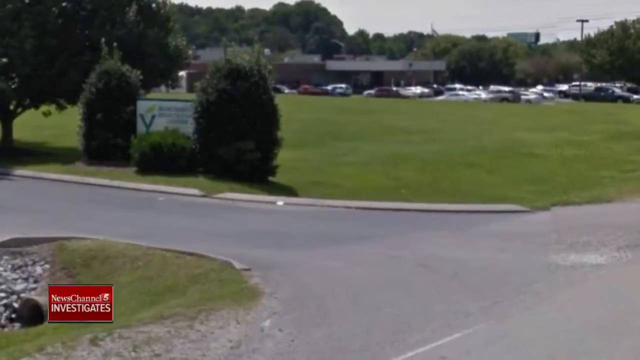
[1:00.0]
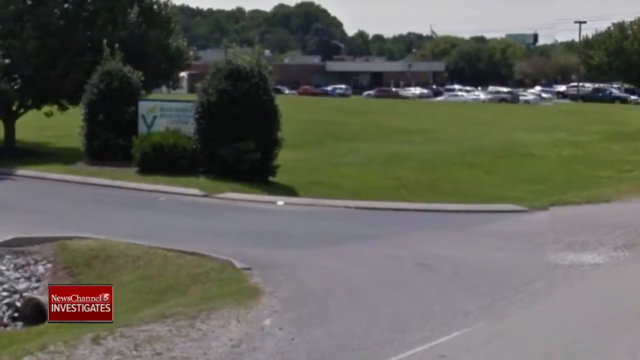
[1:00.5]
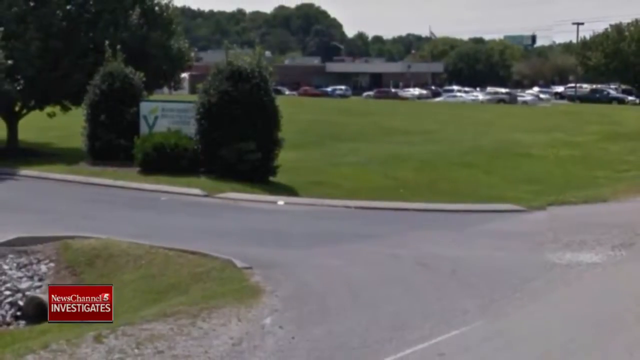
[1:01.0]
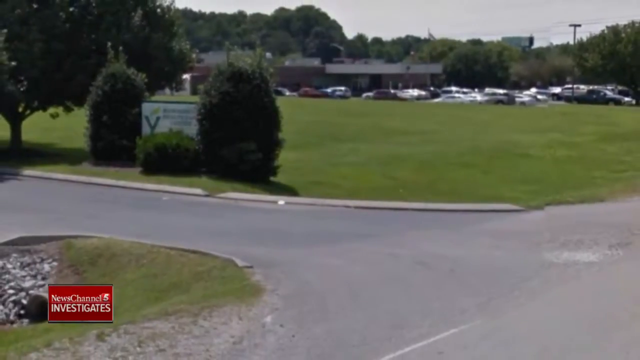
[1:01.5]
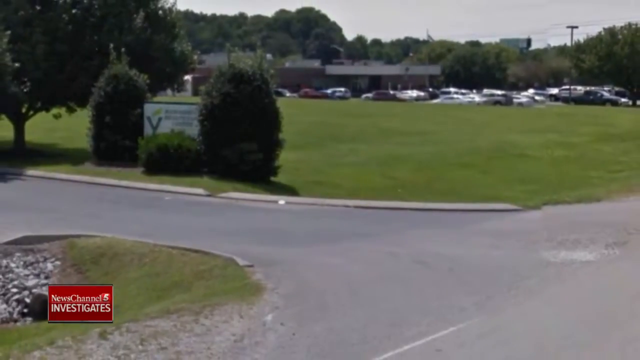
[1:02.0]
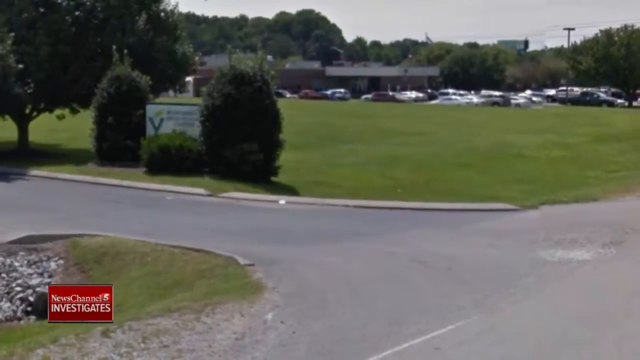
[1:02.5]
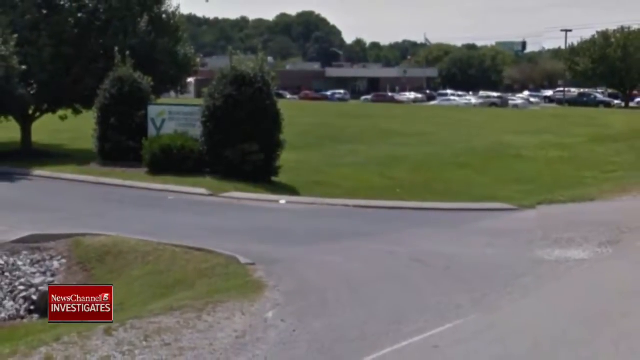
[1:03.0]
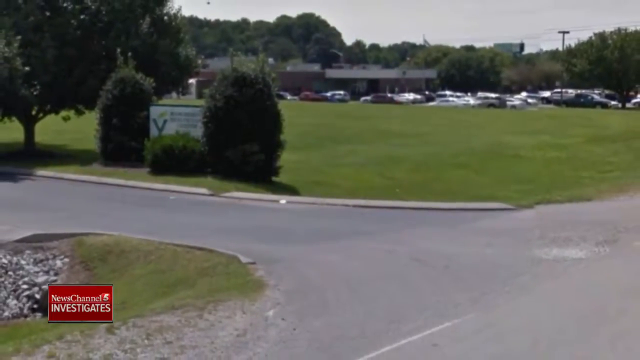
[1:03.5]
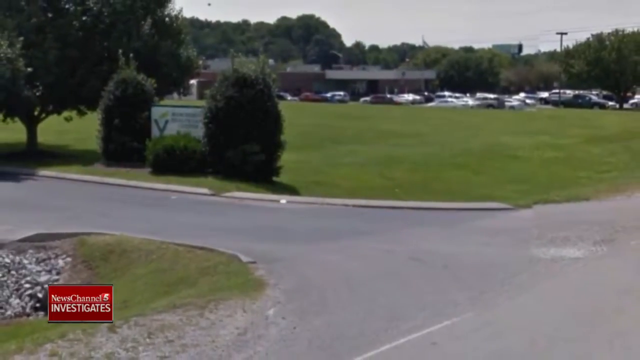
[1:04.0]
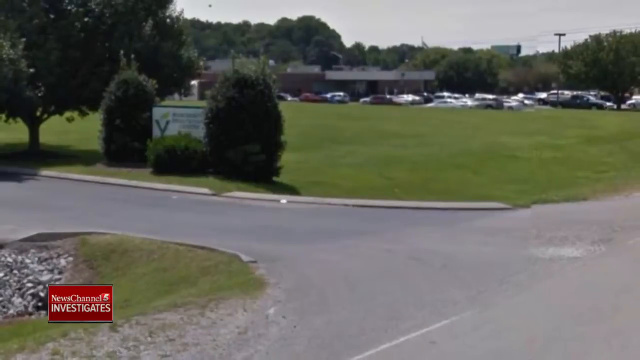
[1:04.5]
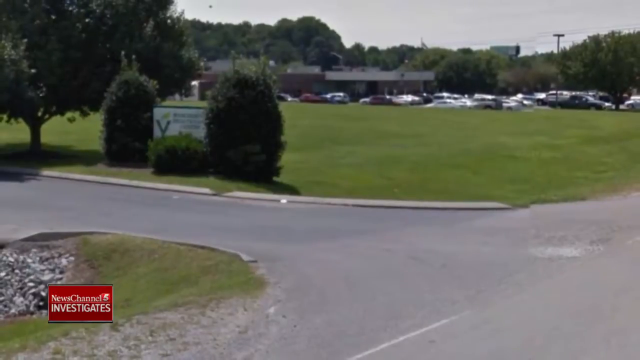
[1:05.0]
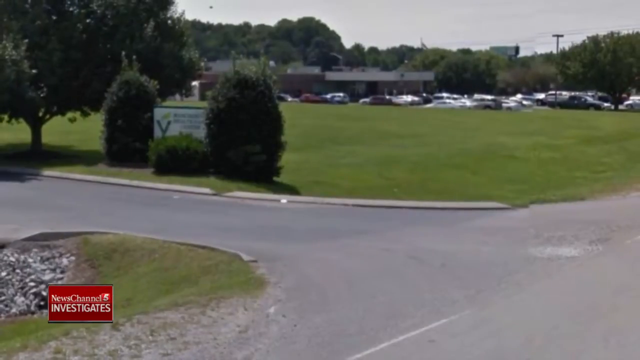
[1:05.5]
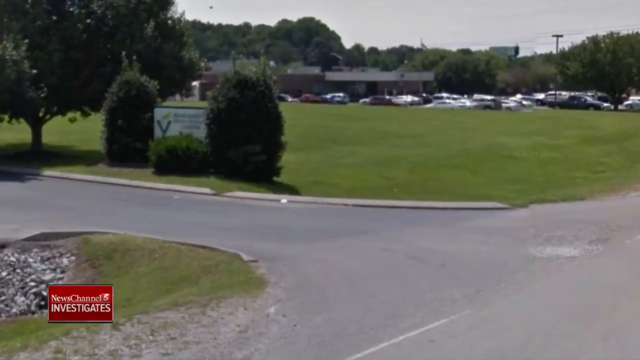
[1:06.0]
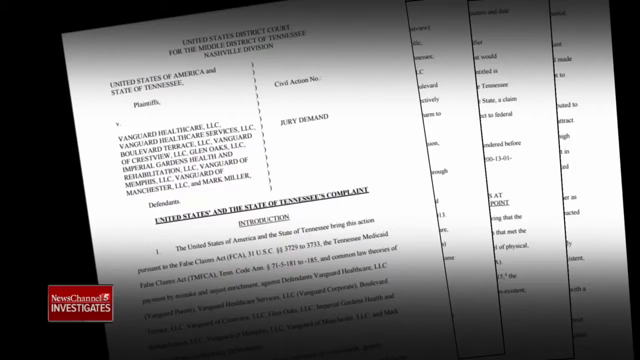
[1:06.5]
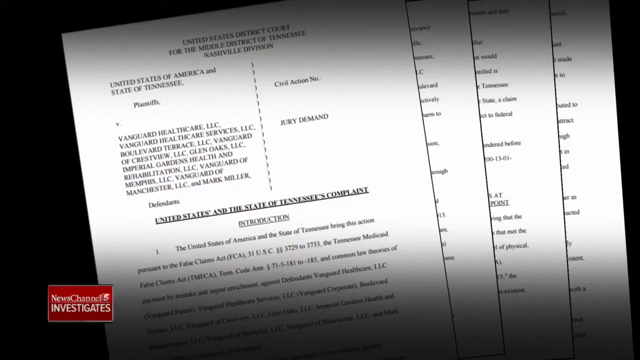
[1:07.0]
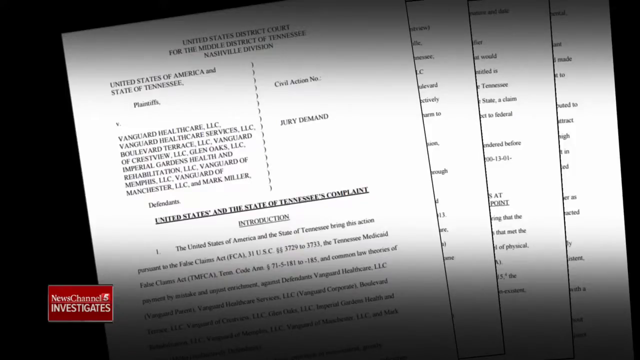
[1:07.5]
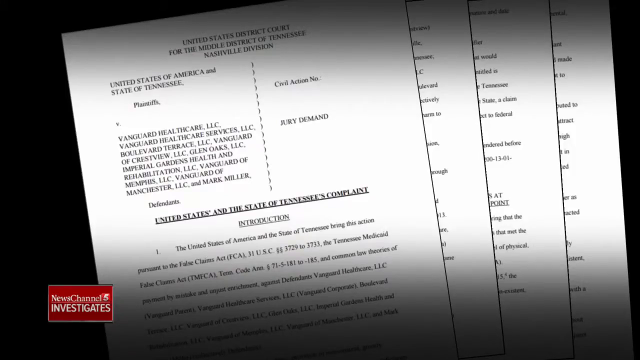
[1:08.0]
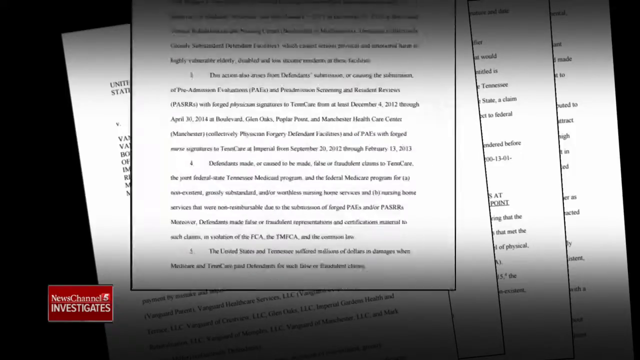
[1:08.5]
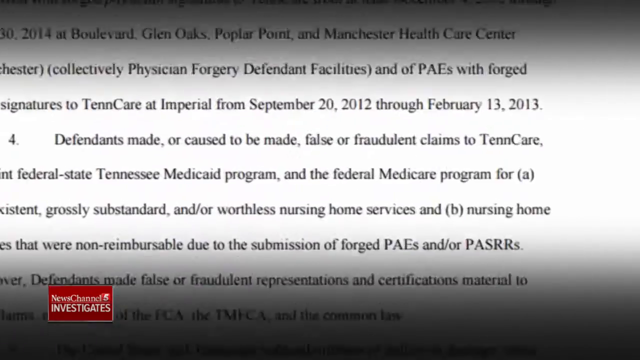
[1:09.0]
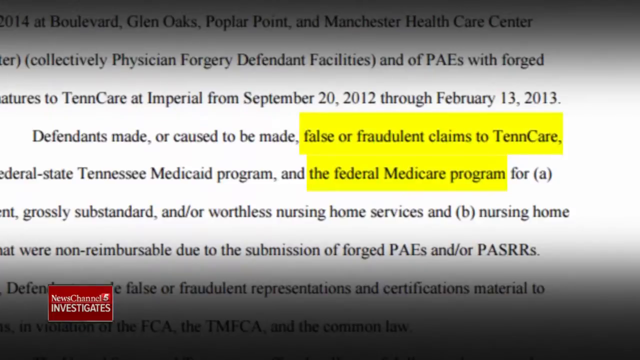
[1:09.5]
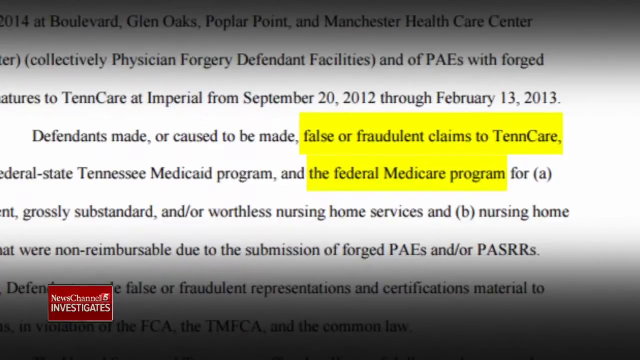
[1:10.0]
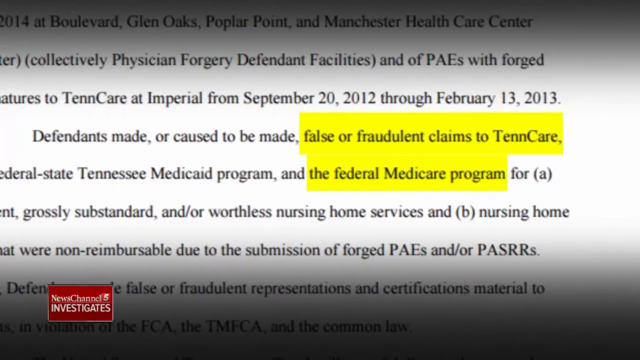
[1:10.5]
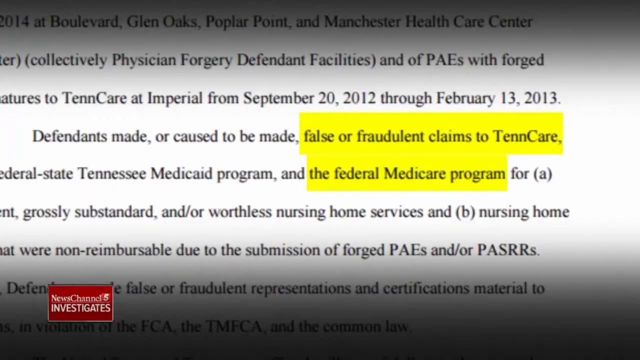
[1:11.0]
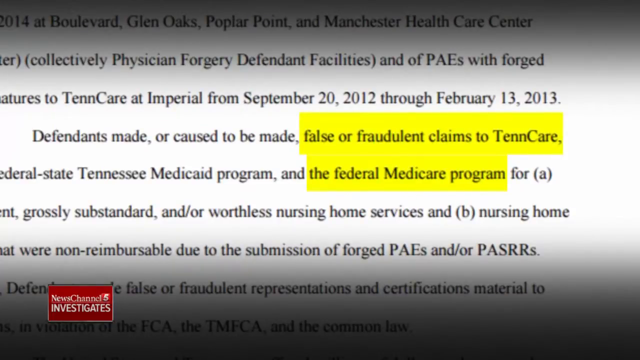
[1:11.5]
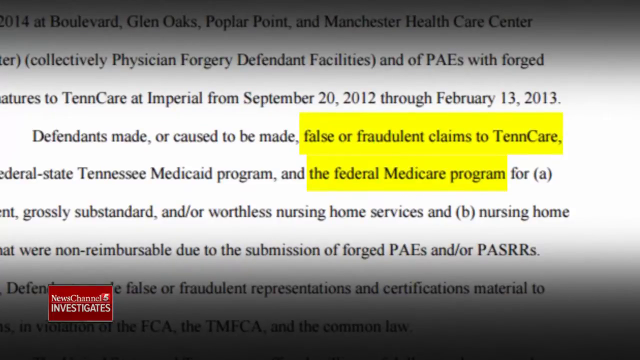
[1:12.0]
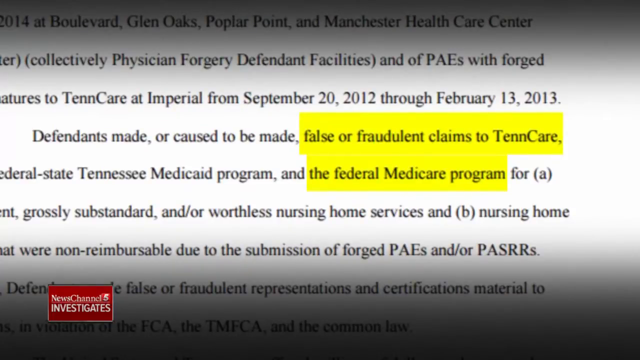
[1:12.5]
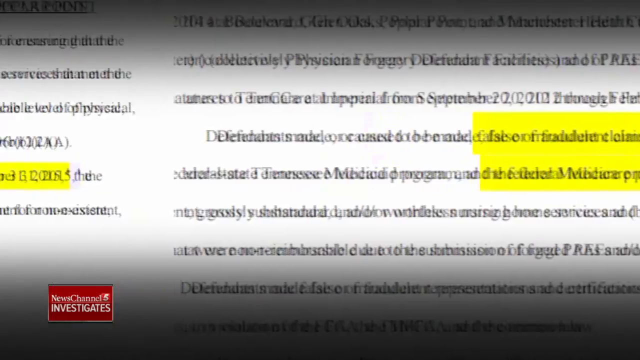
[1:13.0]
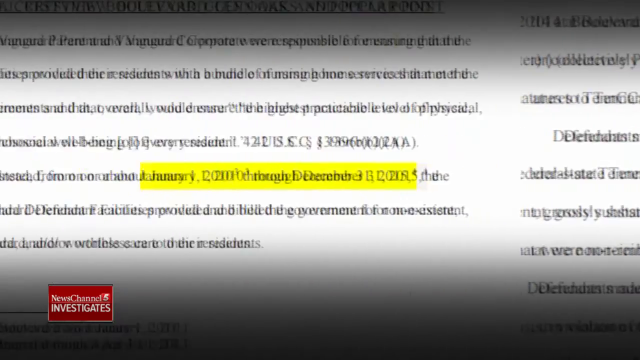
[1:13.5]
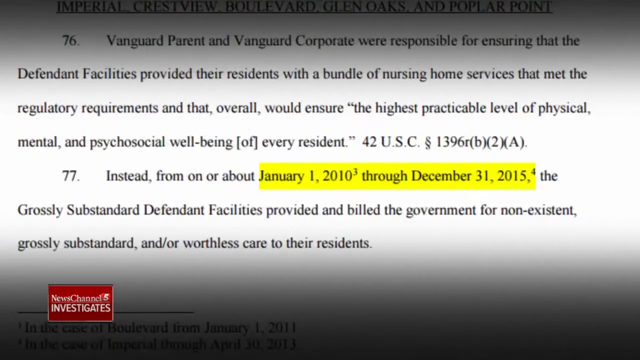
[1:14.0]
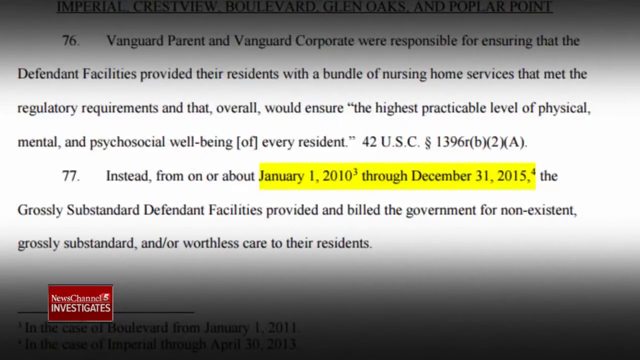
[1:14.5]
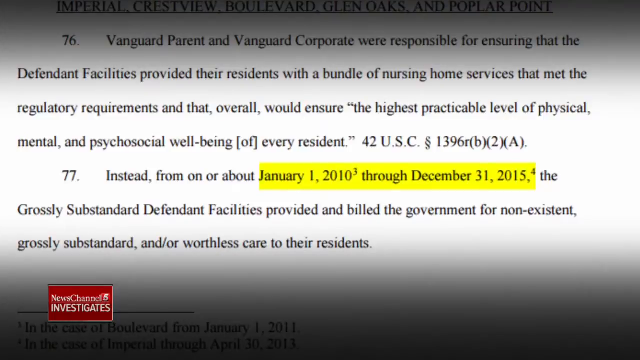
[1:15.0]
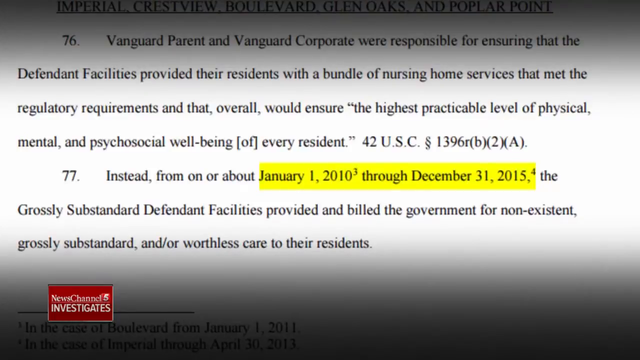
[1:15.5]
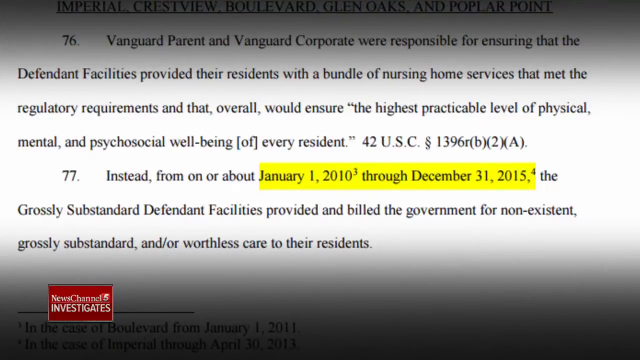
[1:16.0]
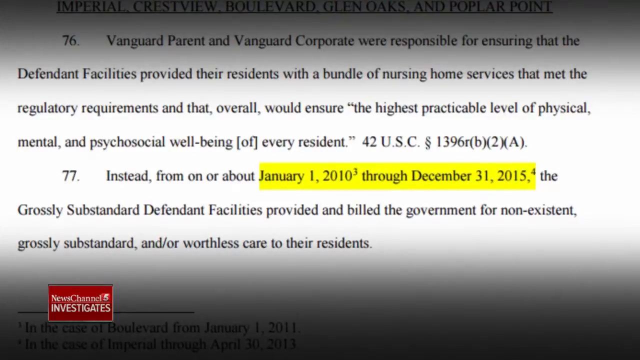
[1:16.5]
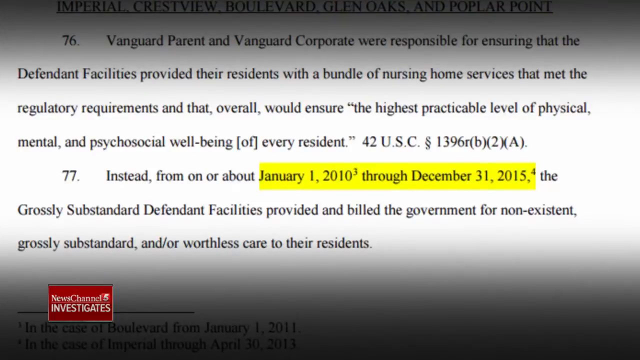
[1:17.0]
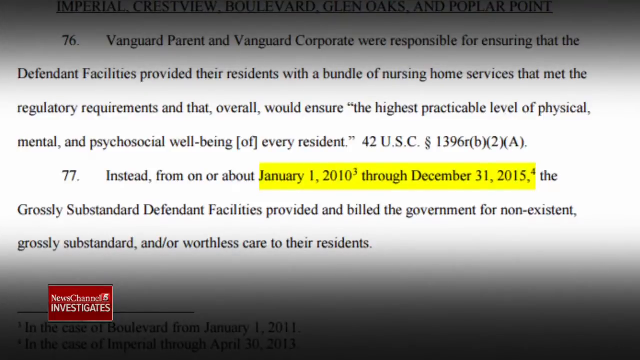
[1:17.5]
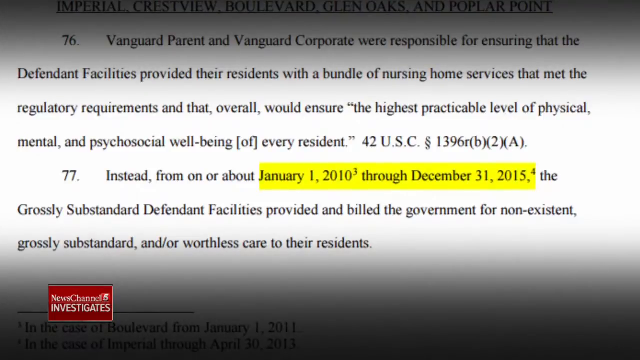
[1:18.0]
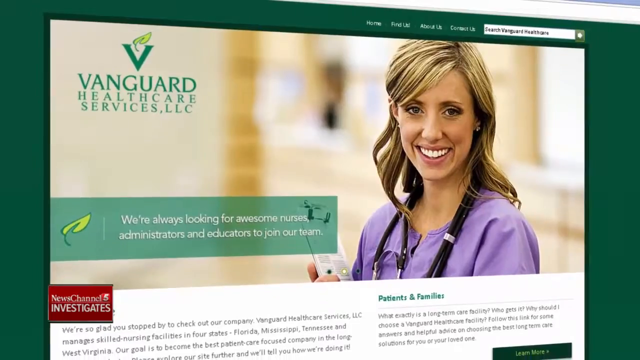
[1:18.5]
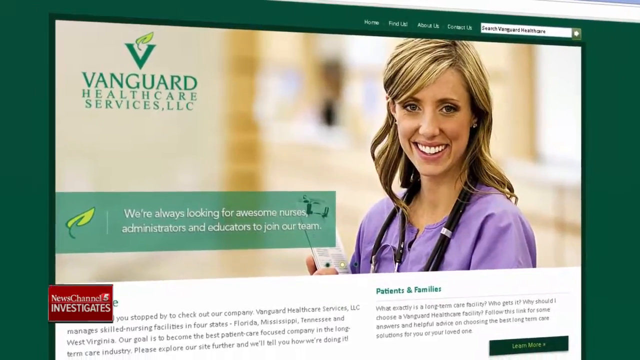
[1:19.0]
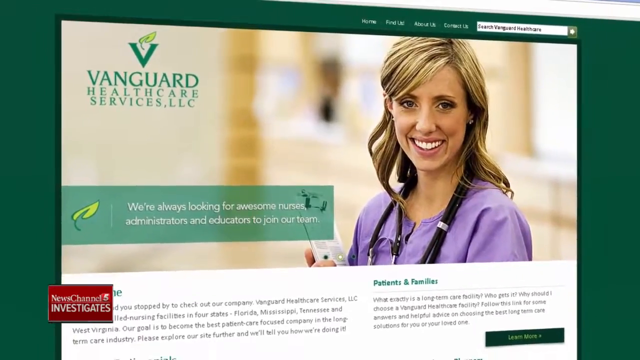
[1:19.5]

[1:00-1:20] Outside a nursing home there are bushes and what appears to be a small meadow, a tree, a few shrubs, and a sign leading up to the nursing home facilities. In the far distance are a road and a parking lot filled with cars; these are possibly properties owned by Mark Miller. Court documents state that the defendants made or caused to be made false or fraudulent claims to TennCare, the Federal State Tennessee Medicare Program and the Federal Medicare Program. Further documents state that from January 1st, 2010 through December 31st, 2015, the grossly substandard defendant facilities provided and billed the government for nonexistent, grossly substandard and/or worthless care to their residents.